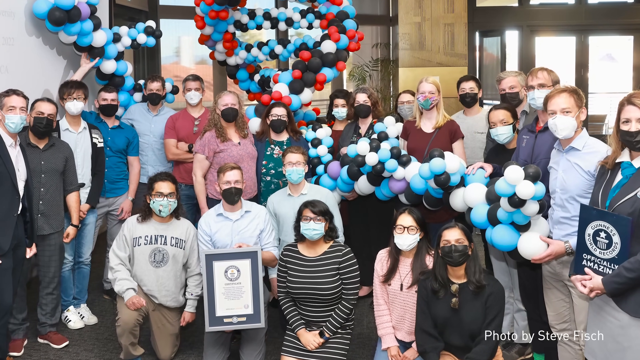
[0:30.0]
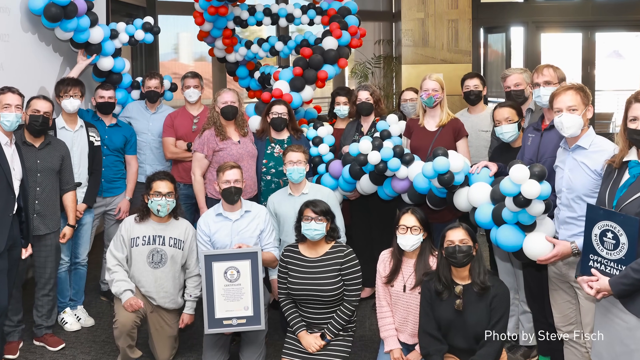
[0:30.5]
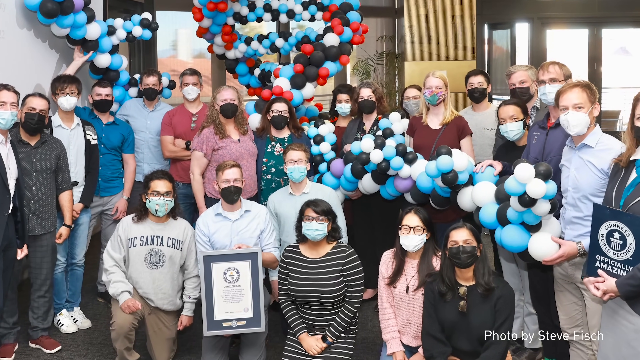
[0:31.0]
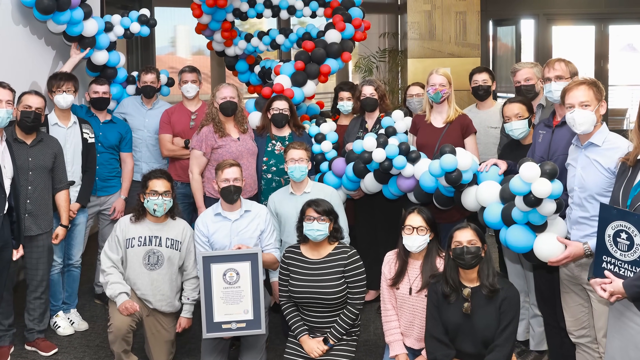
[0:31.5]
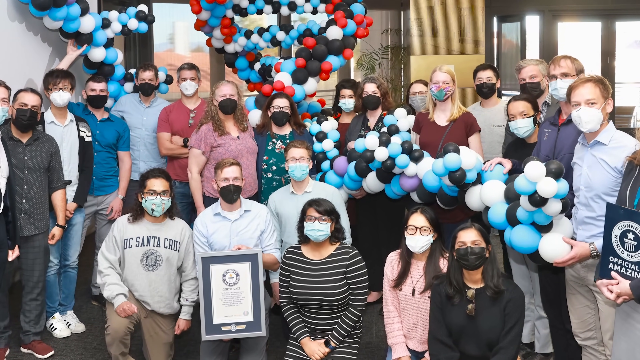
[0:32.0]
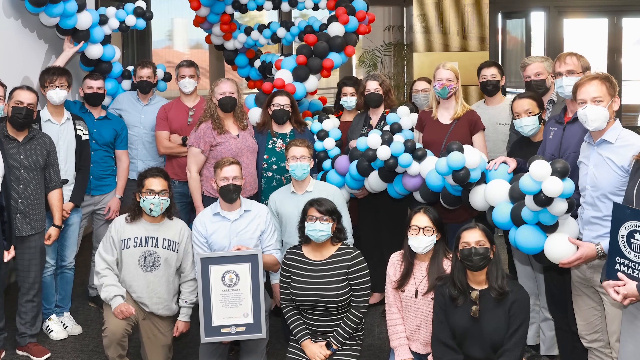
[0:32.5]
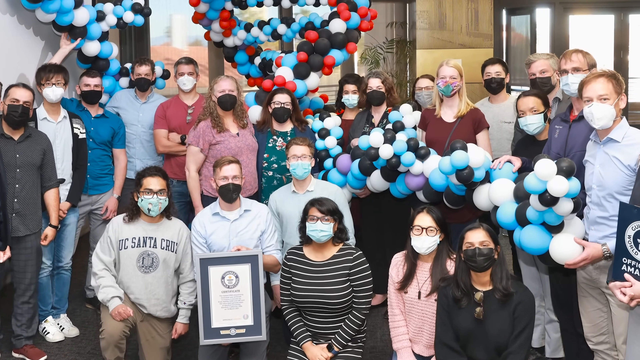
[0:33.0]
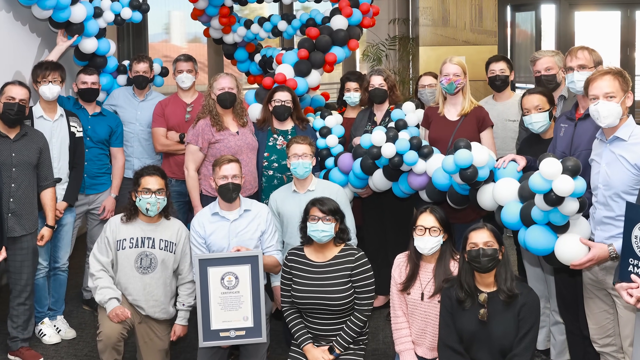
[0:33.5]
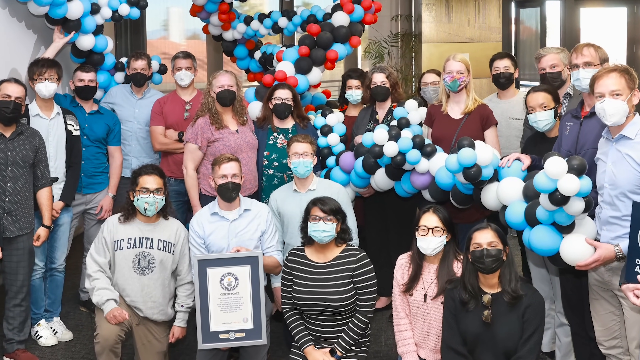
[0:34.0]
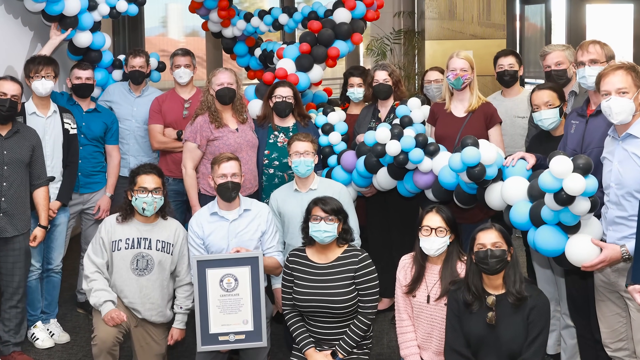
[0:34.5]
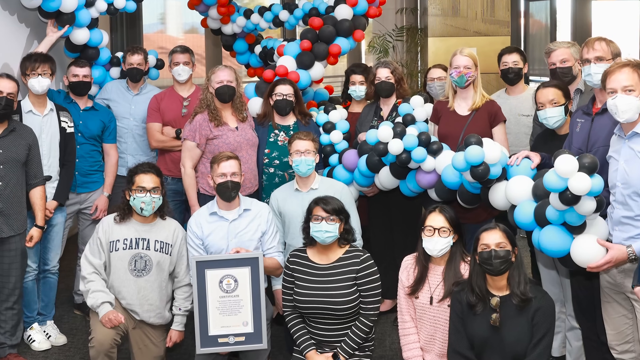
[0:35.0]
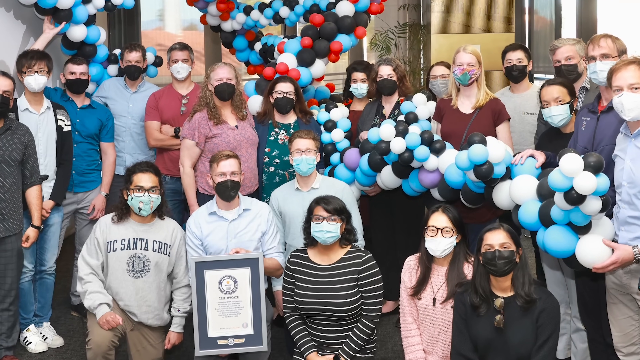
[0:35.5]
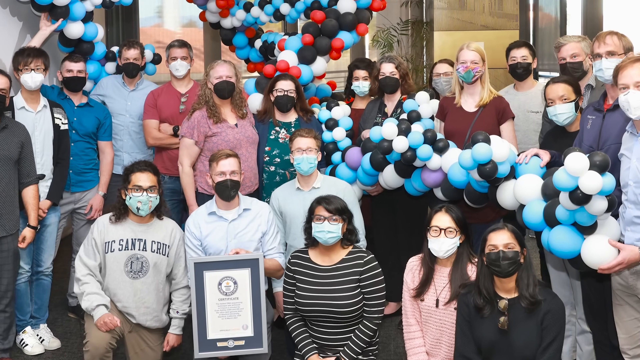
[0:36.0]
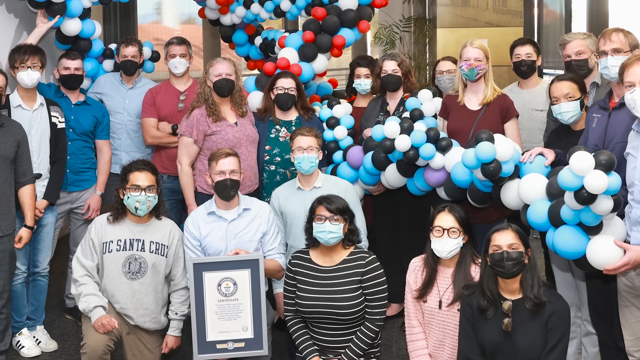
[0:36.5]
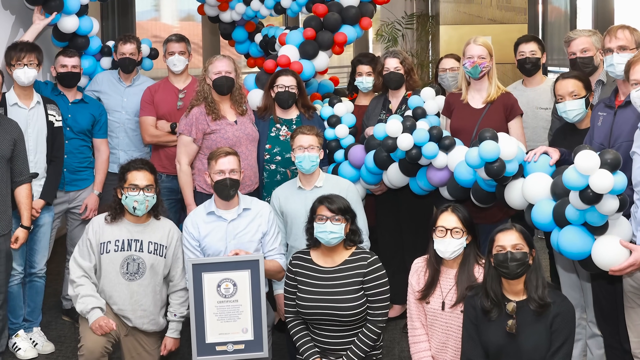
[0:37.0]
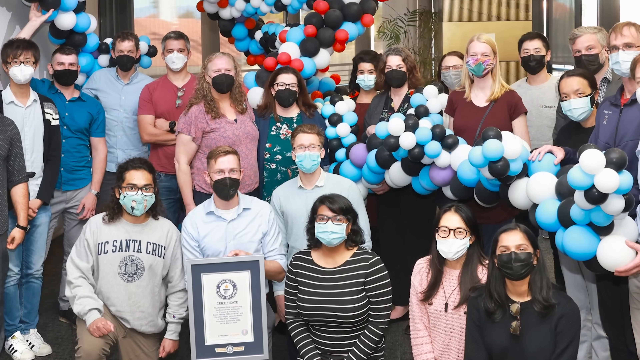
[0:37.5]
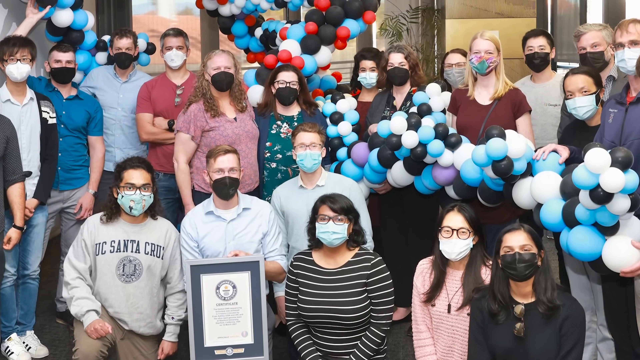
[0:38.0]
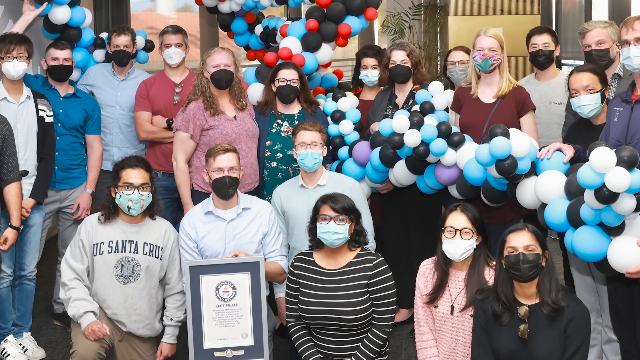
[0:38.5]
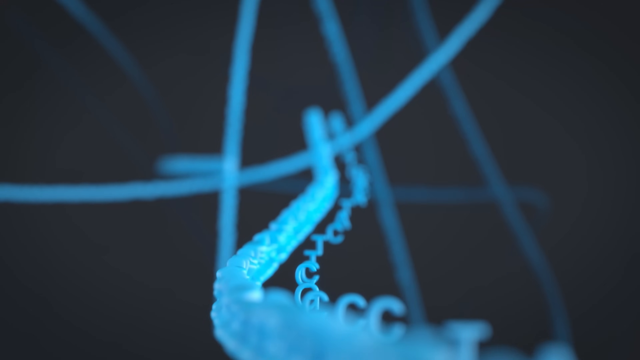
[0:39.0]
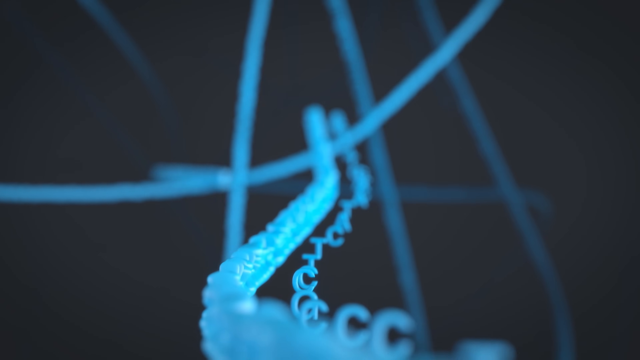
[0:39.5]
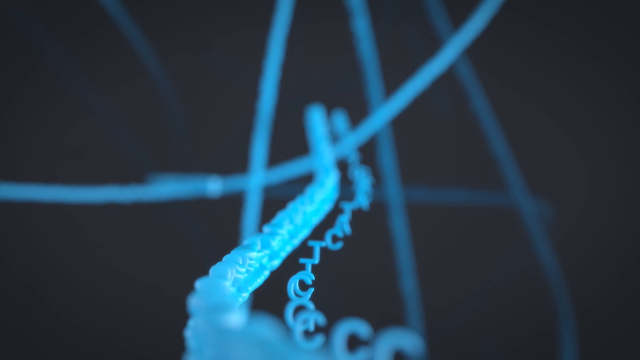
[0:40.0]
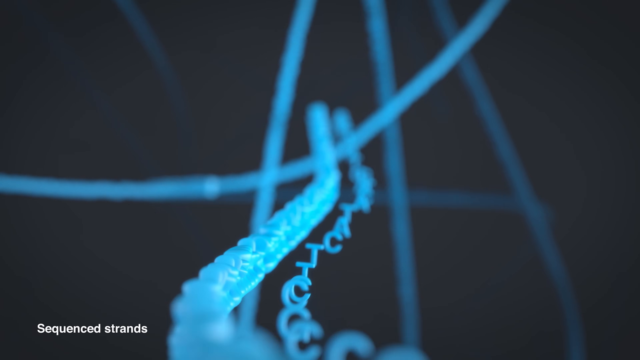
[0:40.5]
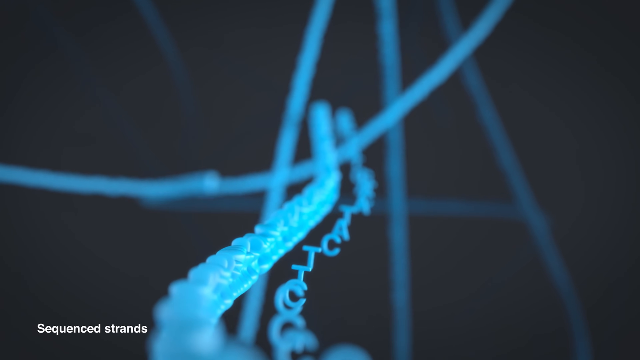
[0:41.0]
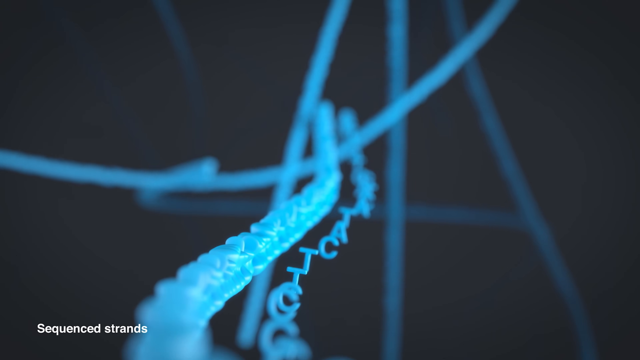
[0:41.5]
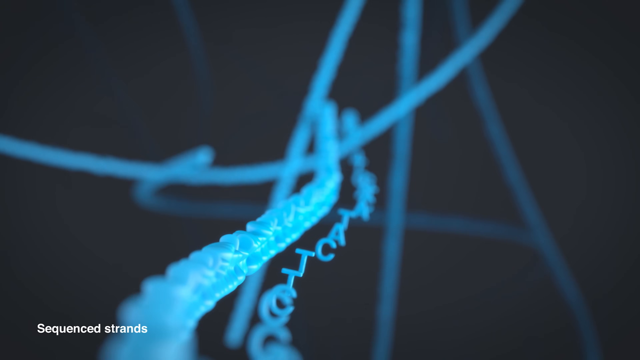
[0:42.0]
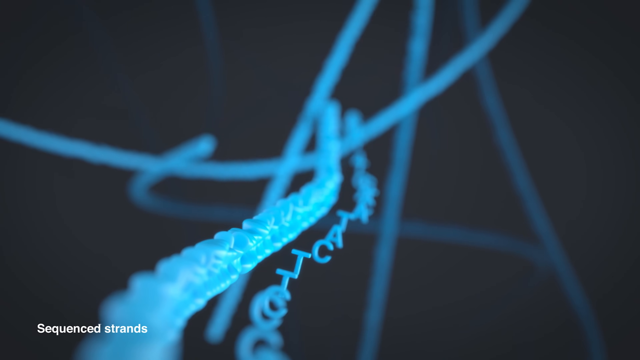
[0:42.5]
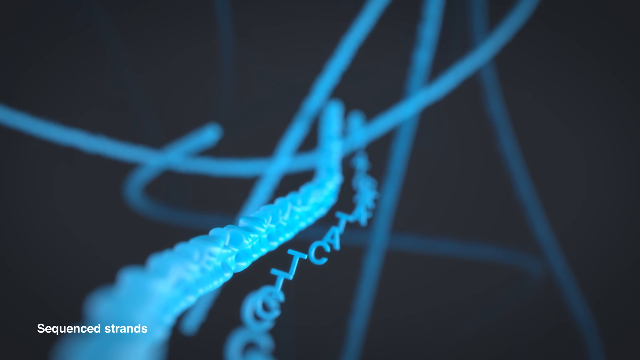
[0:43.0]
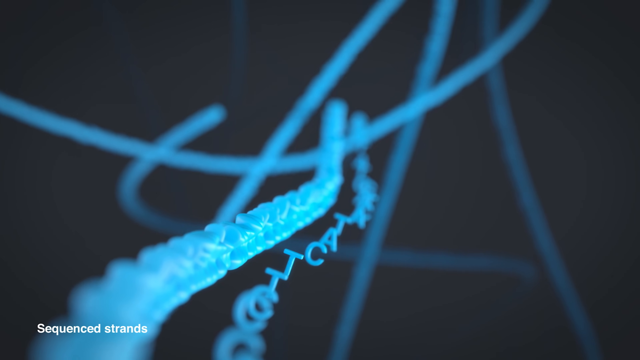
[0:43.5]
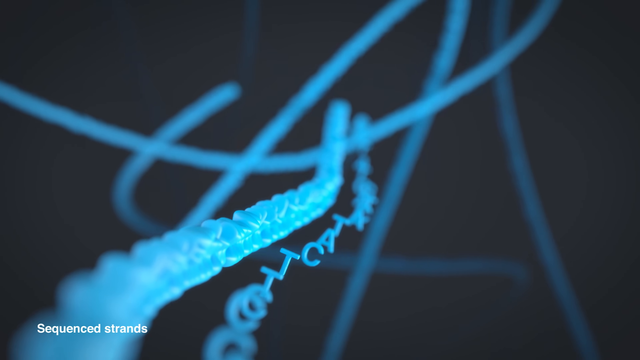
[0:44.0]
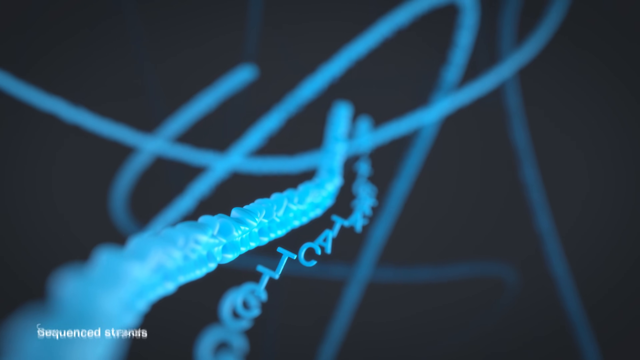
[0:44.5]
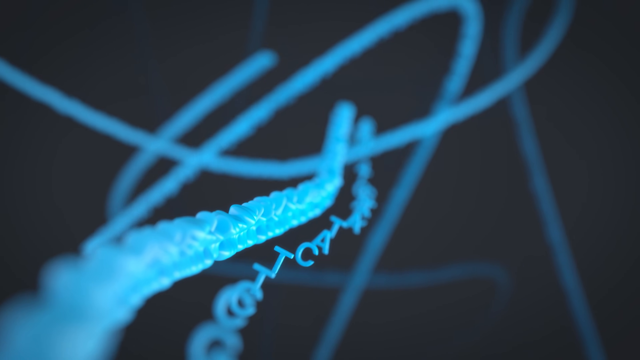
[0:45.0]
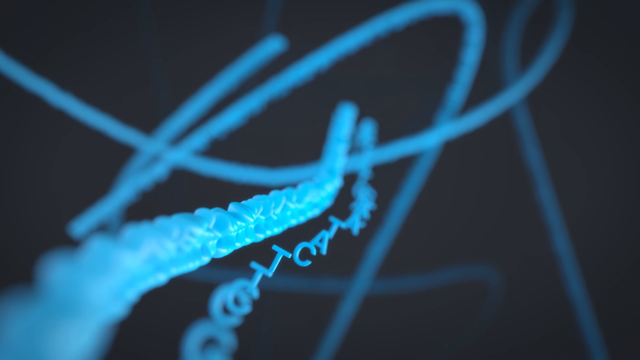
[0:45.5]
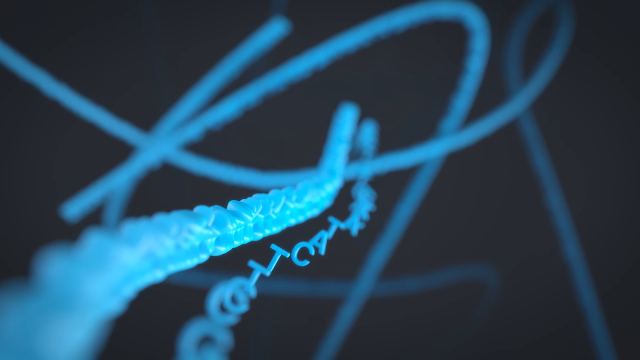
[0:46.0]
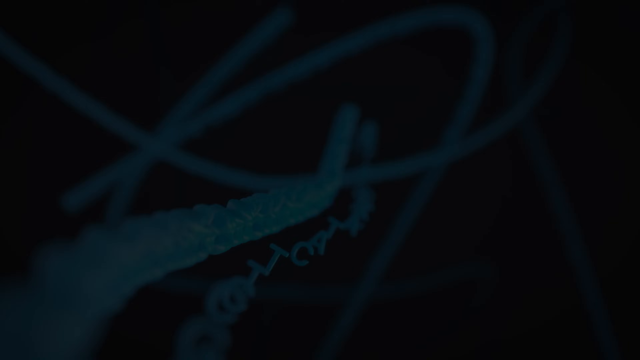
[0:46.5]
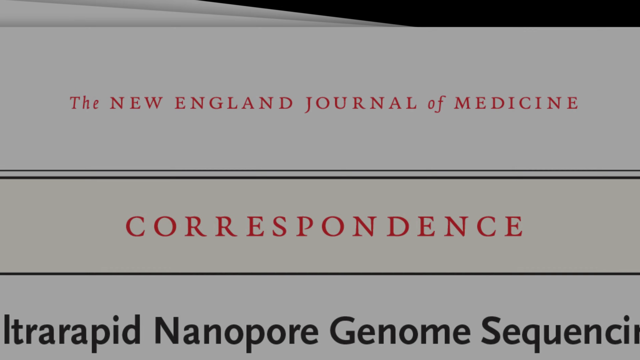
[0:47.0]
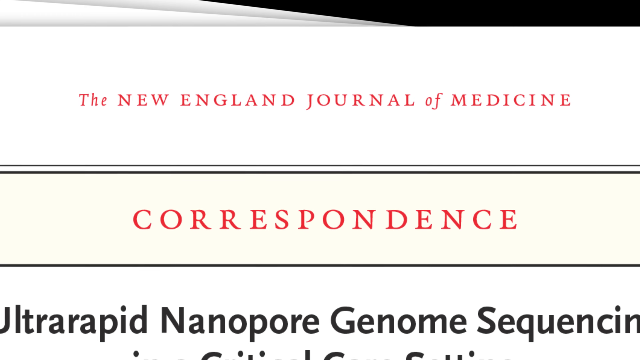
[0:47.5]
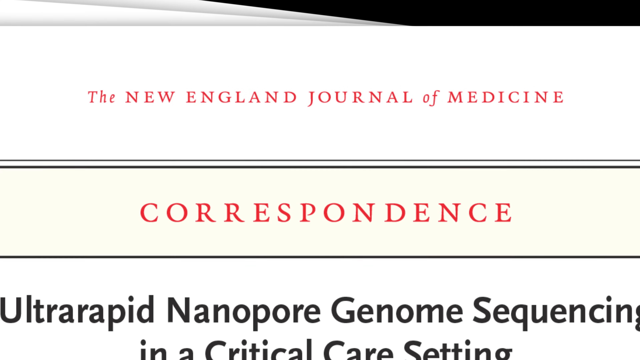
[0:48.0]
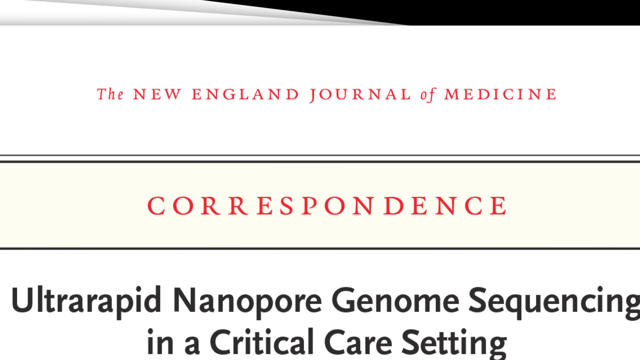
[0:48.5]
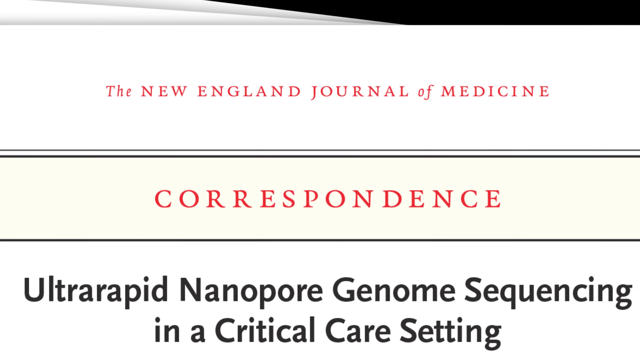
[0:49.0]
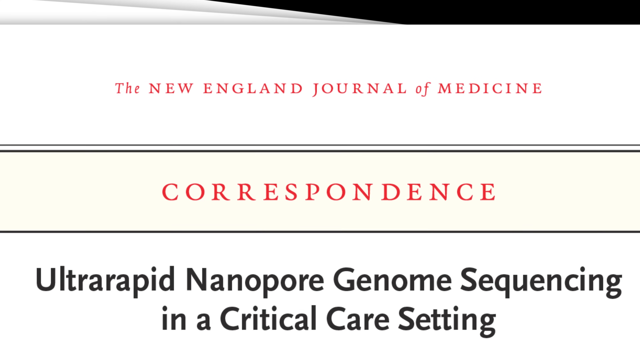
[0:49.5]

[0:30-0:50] About two dozen people, apparently winning a Guinness World Record, pose together; most wear business casual clothes and all wear masks, apparently during COVID. Off to the far right, a woman holds a placard that reads "Guinness World Record's Officially Amazing." Off to the left, a man holds the award they won. There are a number of balloons that look like a DNA sequence, in colors ranging from white to blue to black to purple to red. Next comes a blue DNA or RNA strand with the text "CCTTCATAC." Then text reads "the New England Journal of Medicine correspondence ultra-rapid nanopore genome sequencing in a critical care setting."